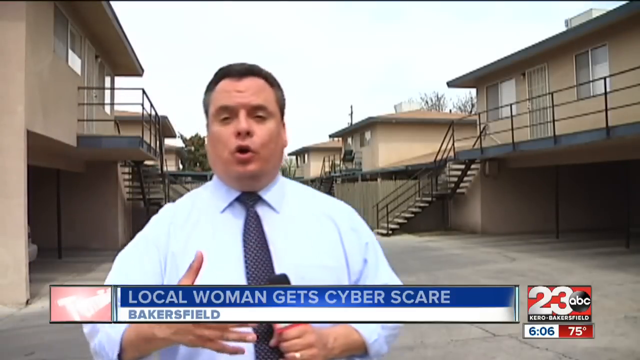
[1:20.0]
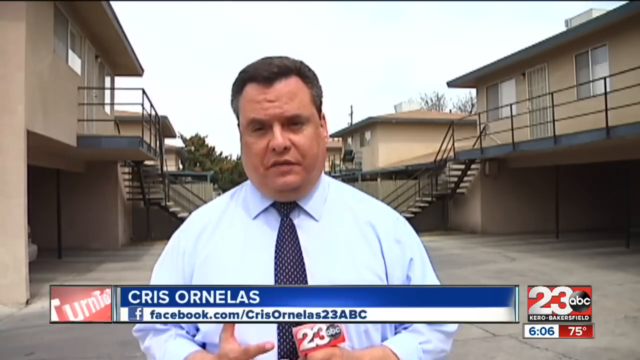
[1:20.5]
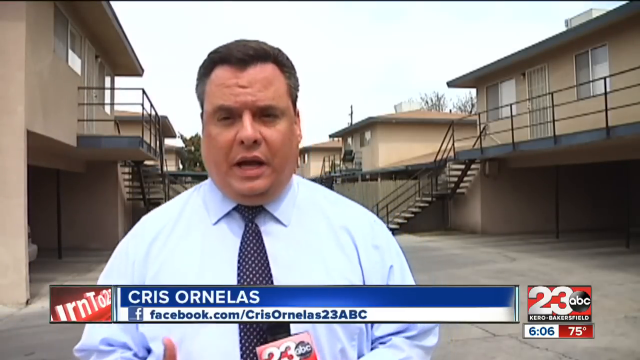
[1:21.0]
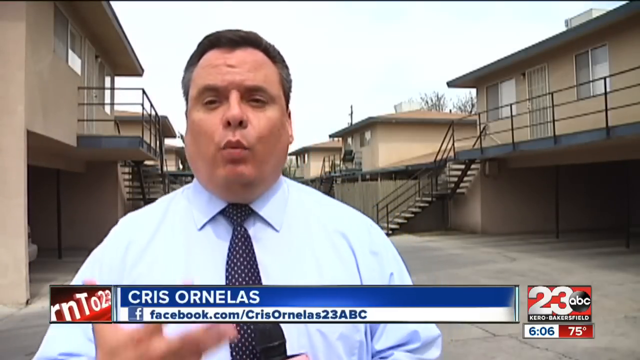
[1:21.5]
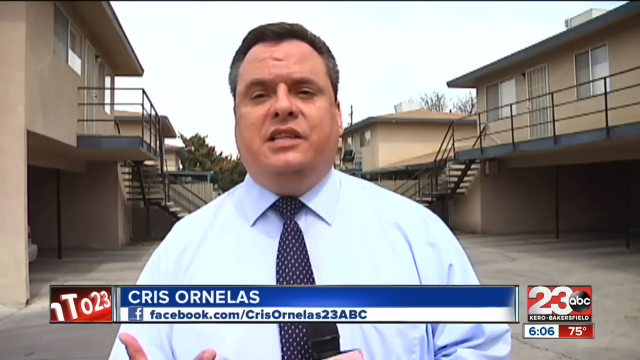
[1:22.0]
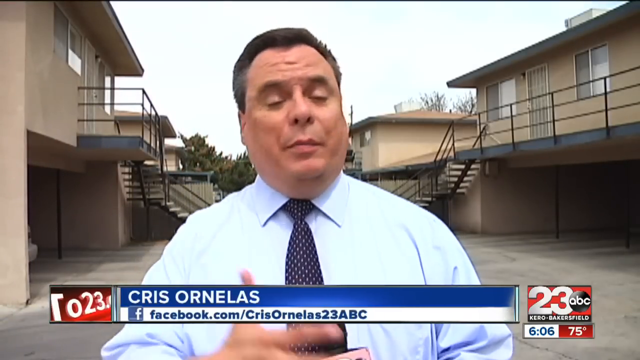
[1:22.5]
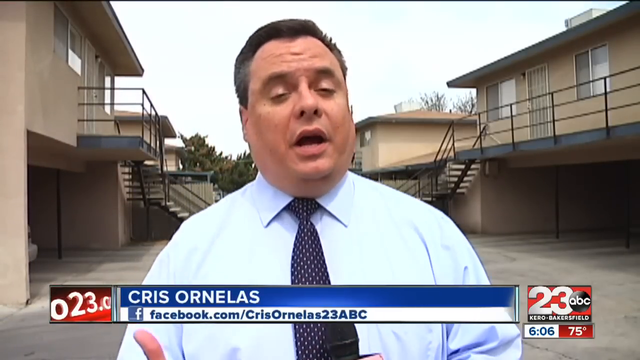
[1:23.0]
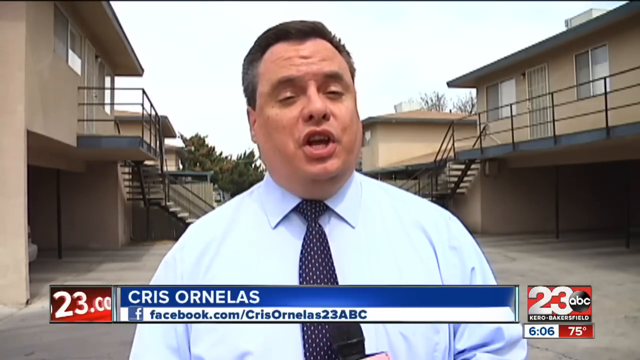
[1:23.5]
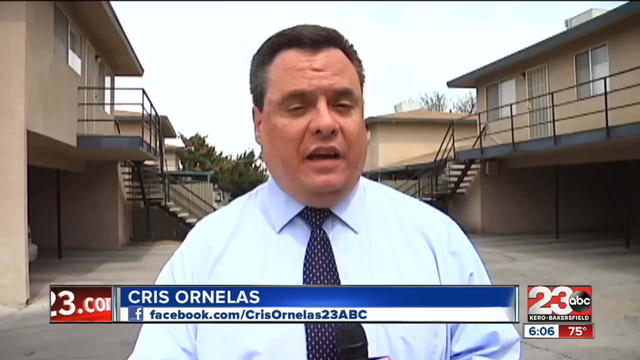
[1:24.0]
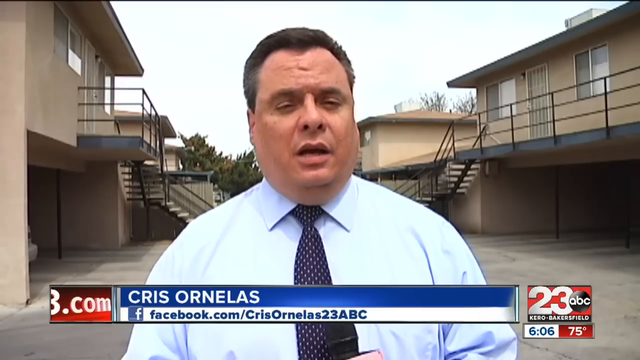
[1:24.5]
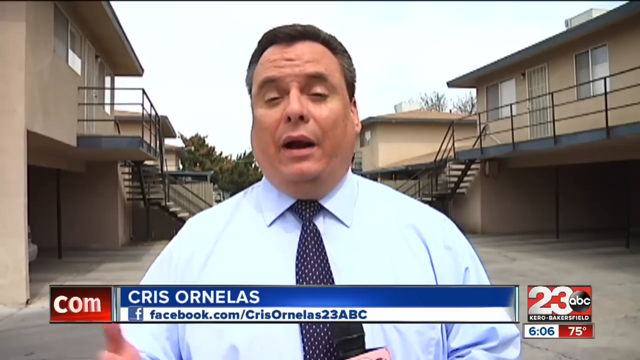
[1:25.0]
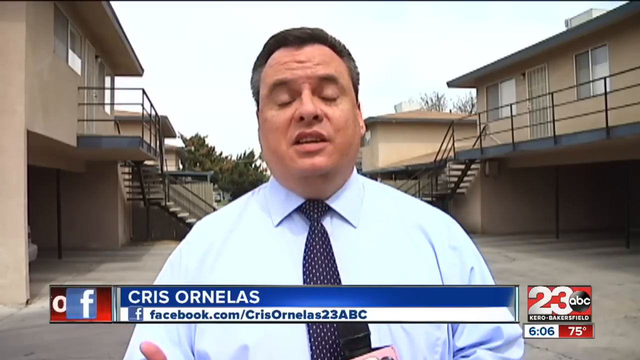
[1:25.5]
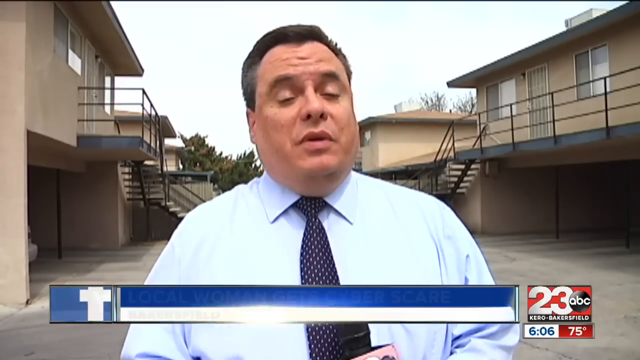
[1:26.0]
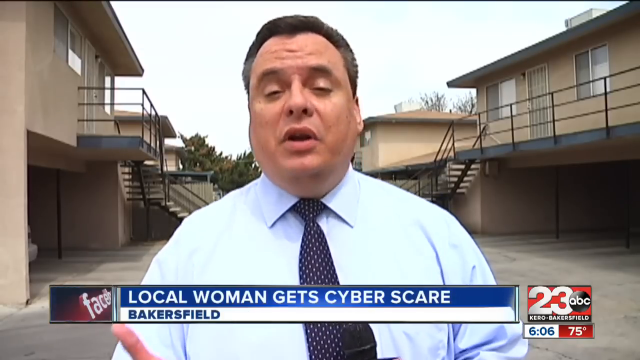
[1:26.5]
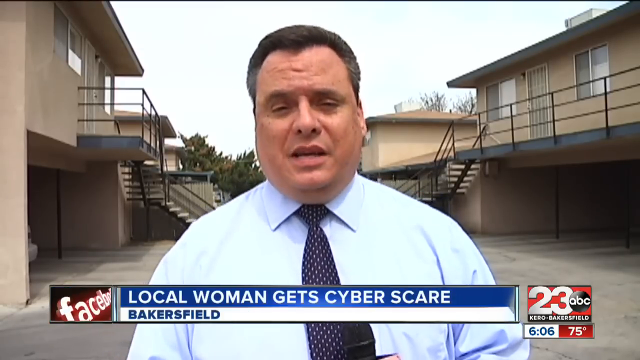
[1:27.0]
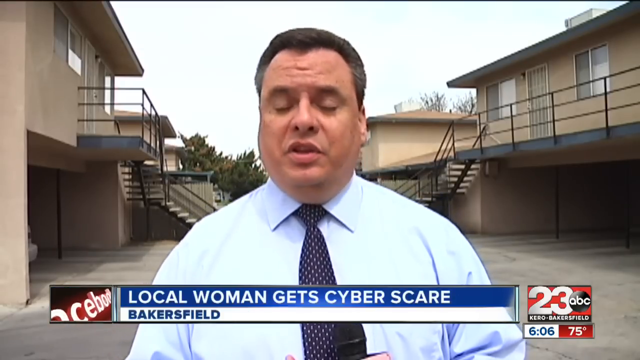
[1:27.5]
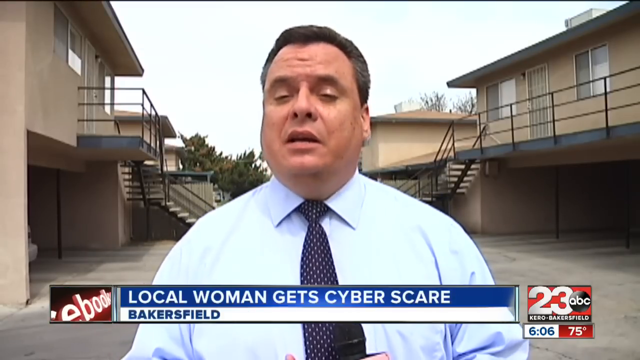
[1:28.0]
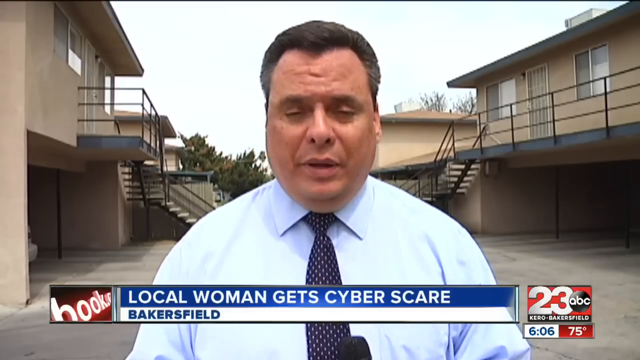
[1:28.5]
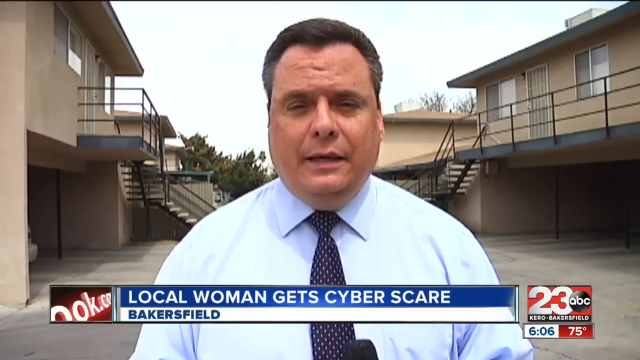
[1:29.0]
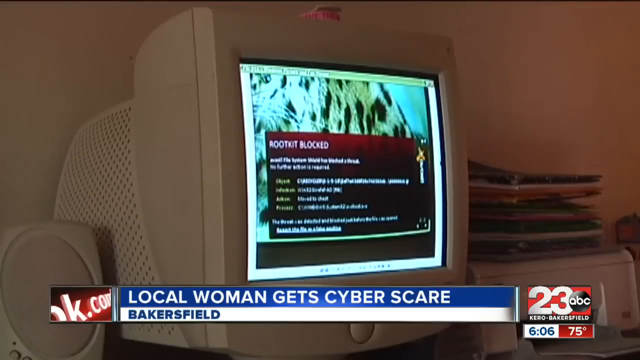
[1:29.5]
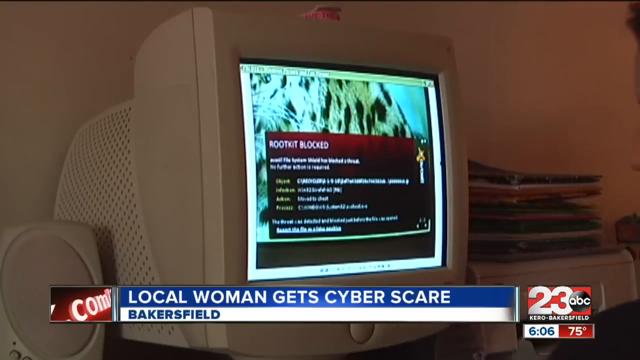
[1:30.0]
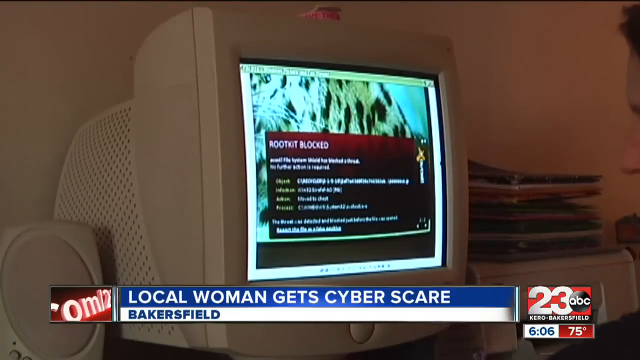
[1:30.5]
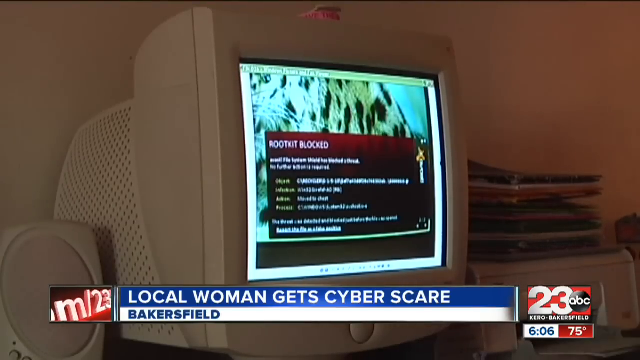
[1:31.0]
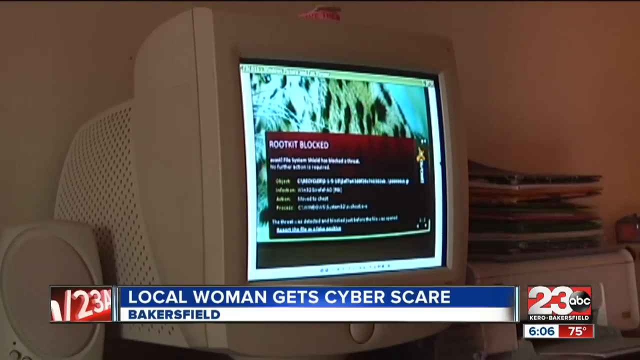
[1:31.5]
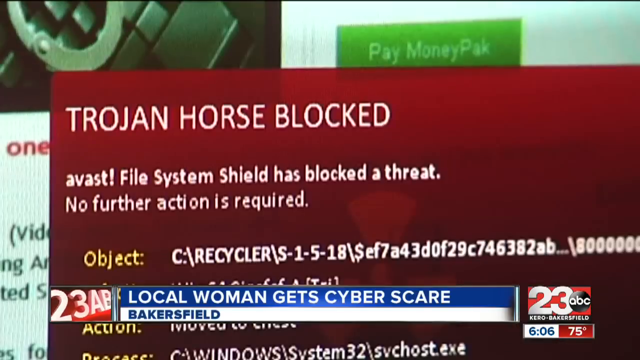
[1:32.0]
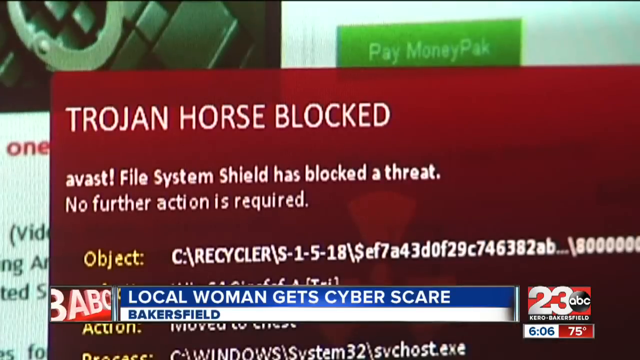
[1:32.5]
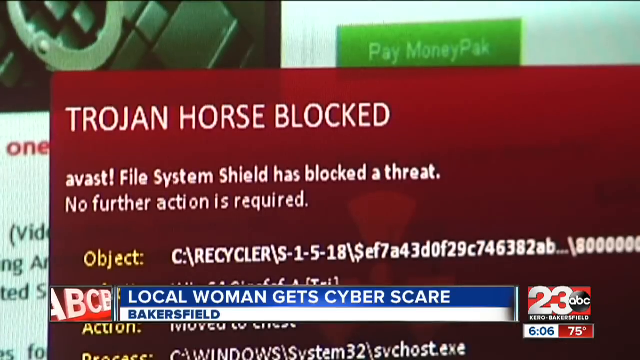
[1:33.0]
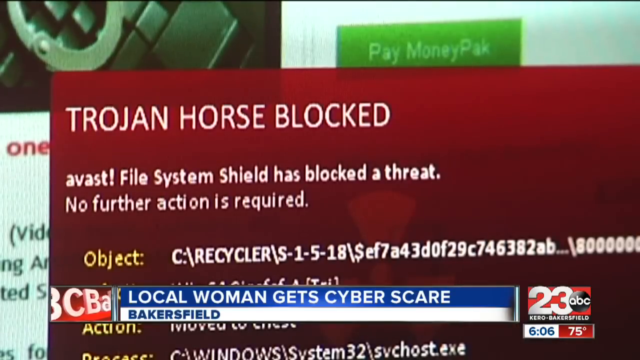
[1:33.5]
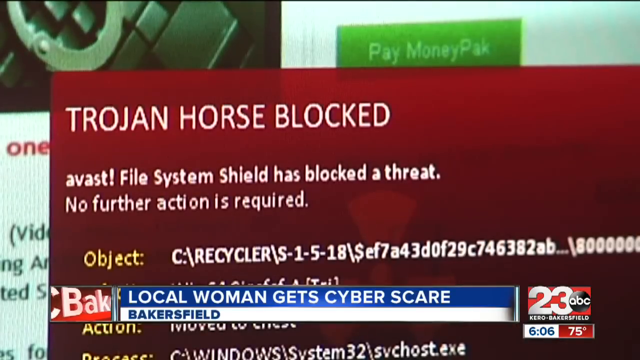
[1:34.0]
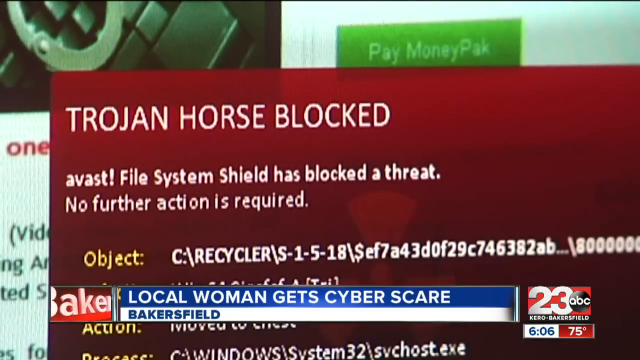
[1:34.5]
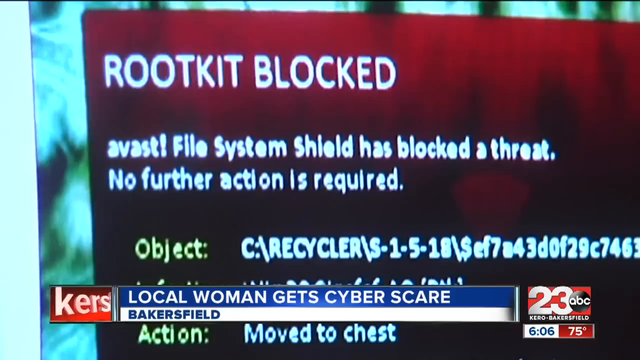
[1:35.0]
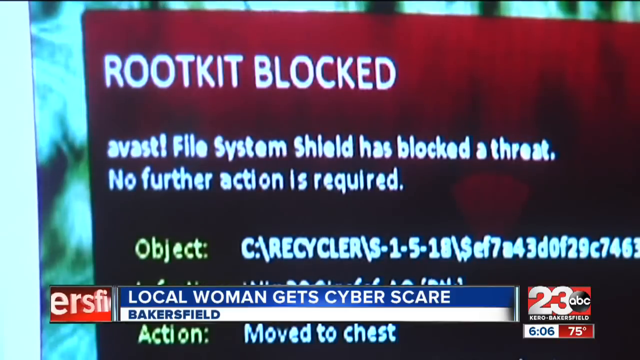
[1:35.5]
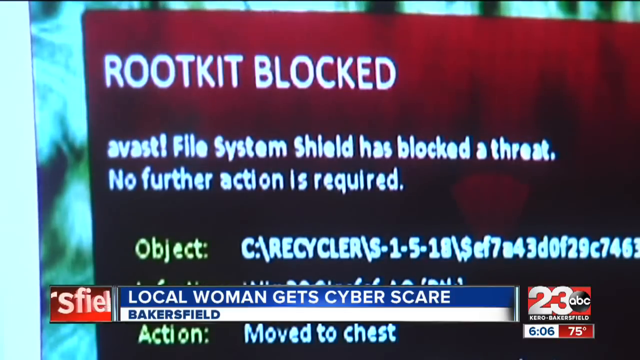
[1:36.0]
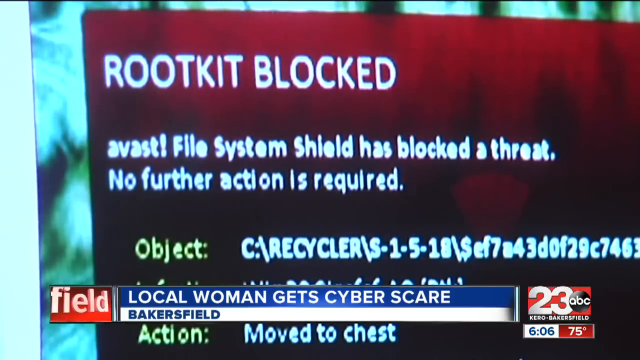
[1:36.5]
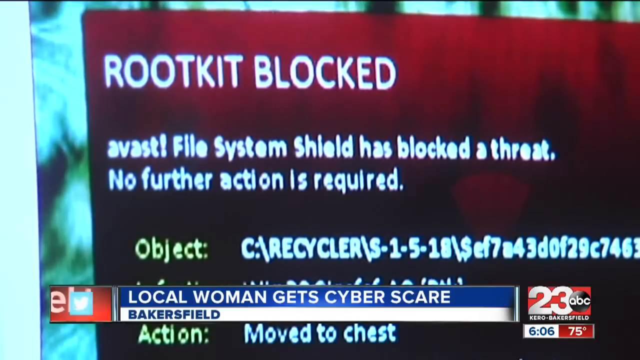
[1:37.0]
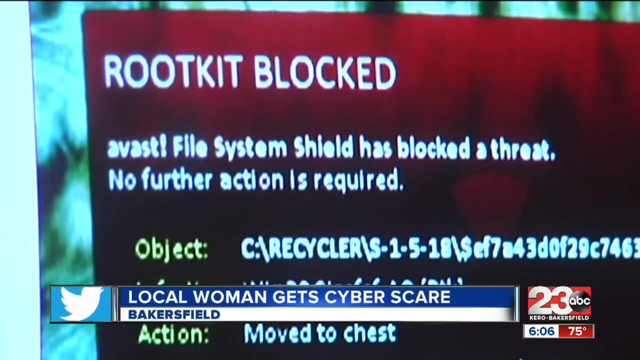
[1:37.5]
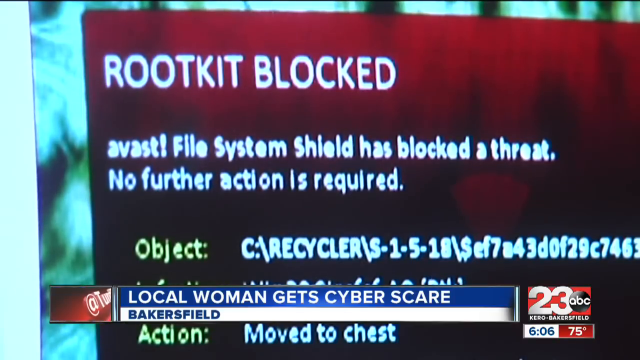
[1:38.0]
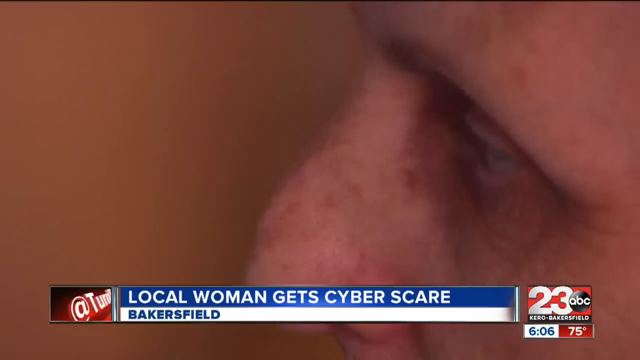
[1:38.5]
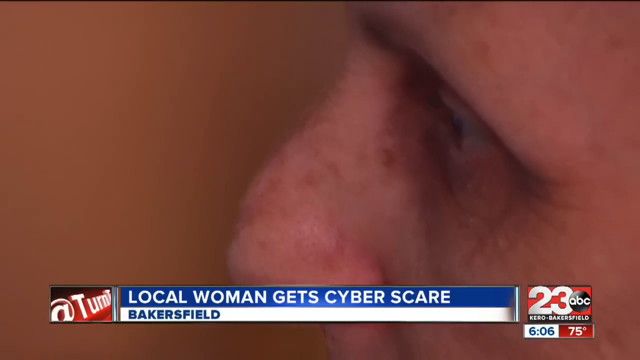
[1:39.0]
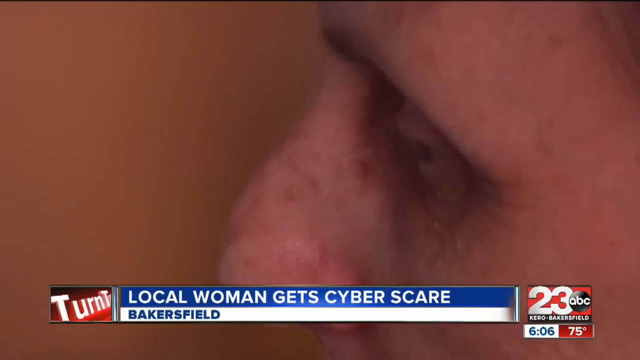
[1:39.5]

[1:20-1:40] The News Channel 23 ABC Kero and Bakersfield watermark is in the bottom right-hand corner, with the time, 6:06, and the temperature, 75, beneath it. The headline at the bottom middle reads "Local woman gets cyber scare," with the location, "Bakersfield," underneath. Correspondent Chris Ornelas is on location; he is in his late 30s or early 40s, with dark hair and dark eyes, wearing a light blue shirt and a blue tie. Directly behind him on both sides is an apartment building of two-level apartments. Under his name at the bottom is "Facebook.com/" followed by the letters C-R-I-S, a capital O, R-N-E-L-A-S, and "23ABC," apparently his Facebook information.